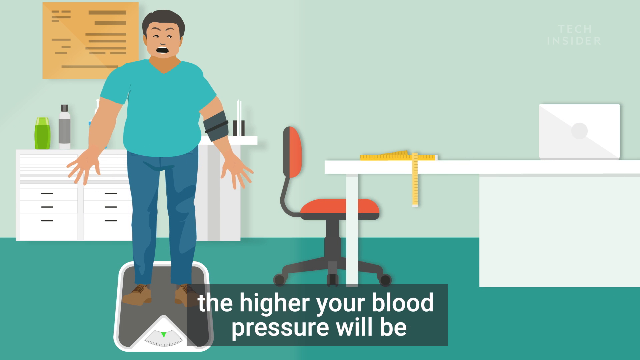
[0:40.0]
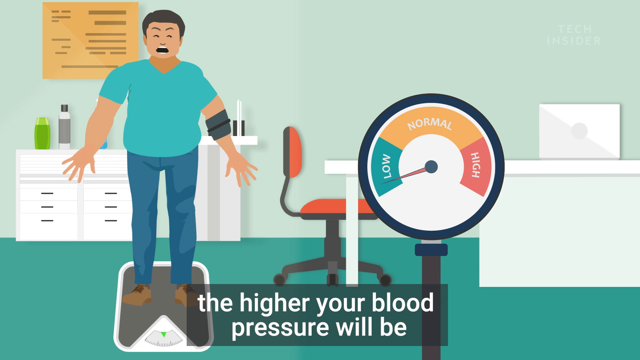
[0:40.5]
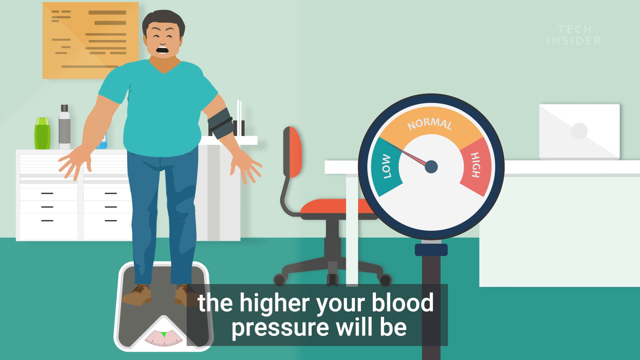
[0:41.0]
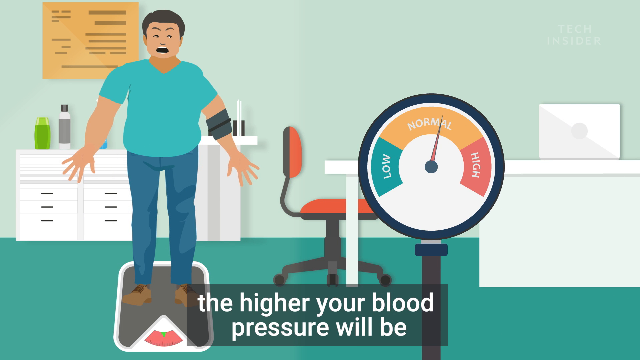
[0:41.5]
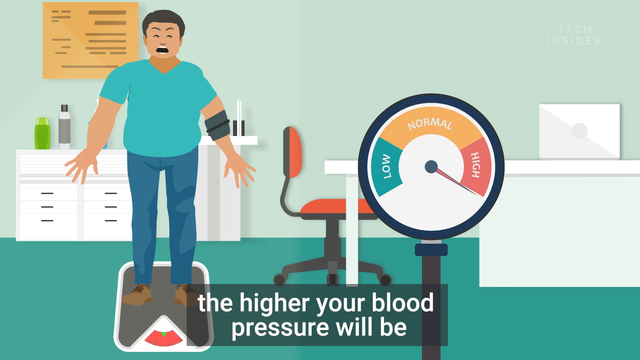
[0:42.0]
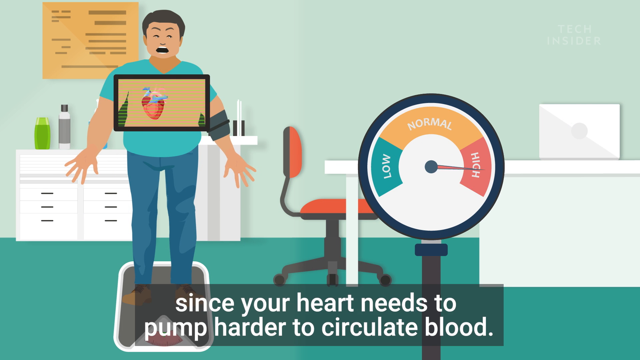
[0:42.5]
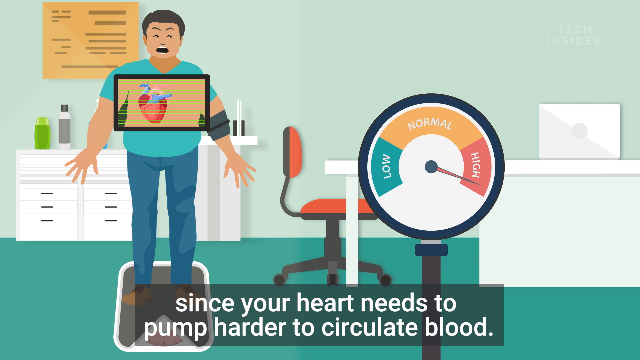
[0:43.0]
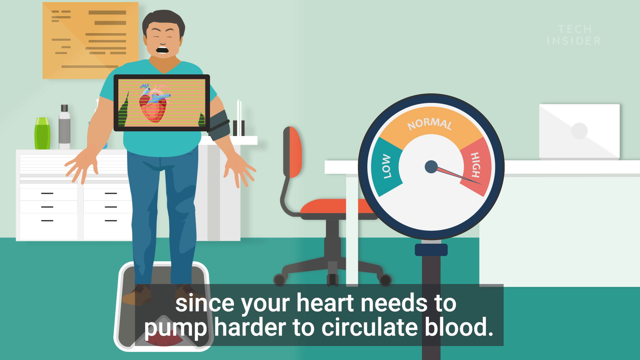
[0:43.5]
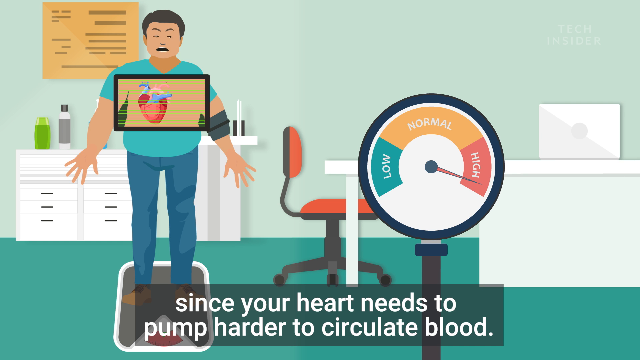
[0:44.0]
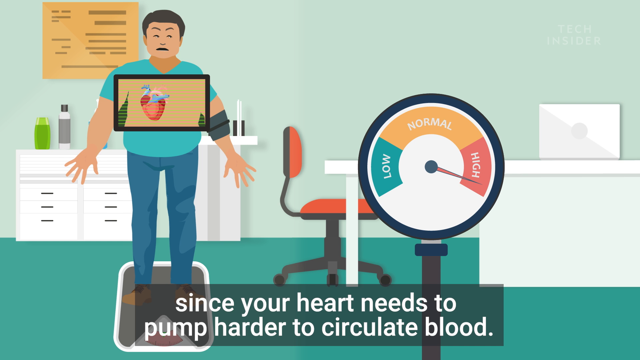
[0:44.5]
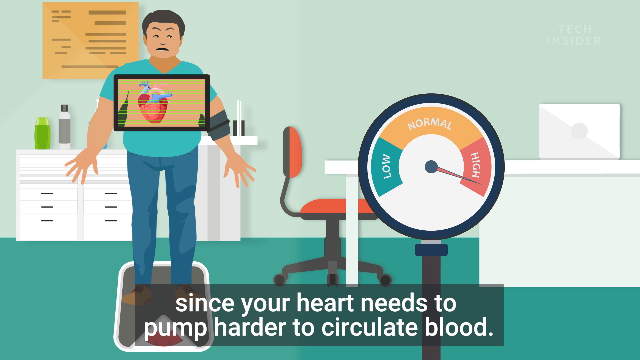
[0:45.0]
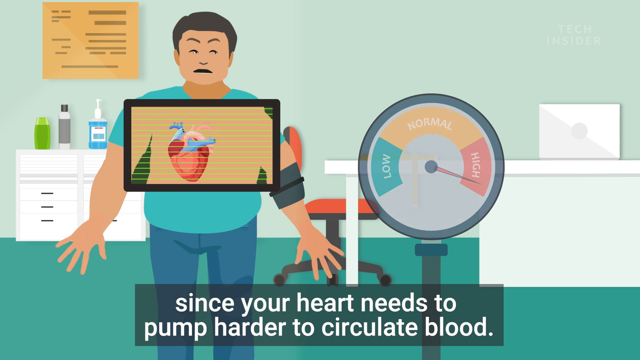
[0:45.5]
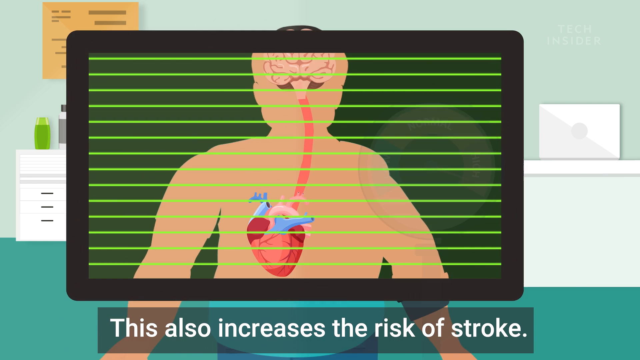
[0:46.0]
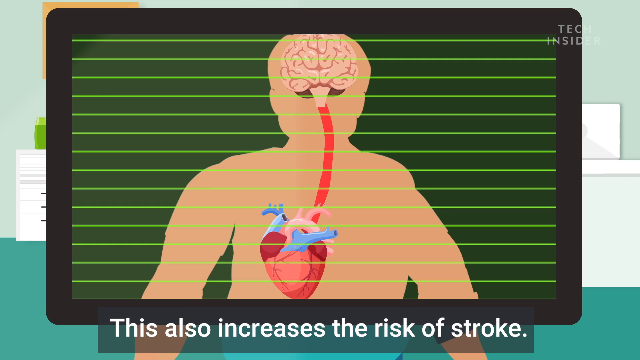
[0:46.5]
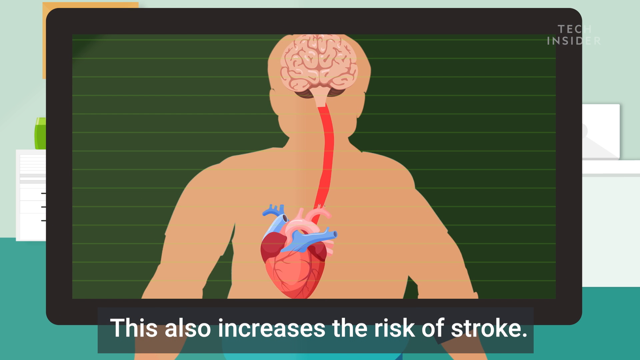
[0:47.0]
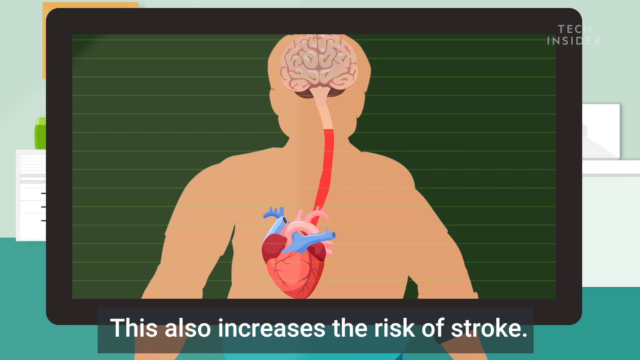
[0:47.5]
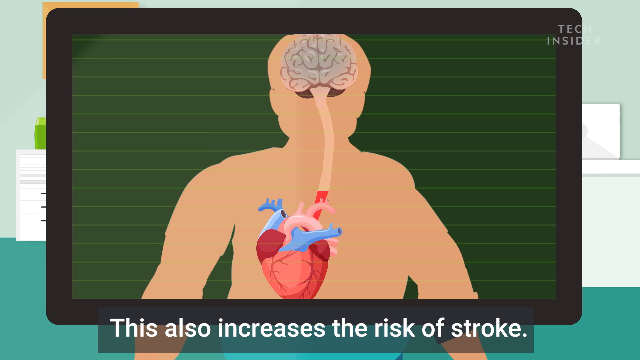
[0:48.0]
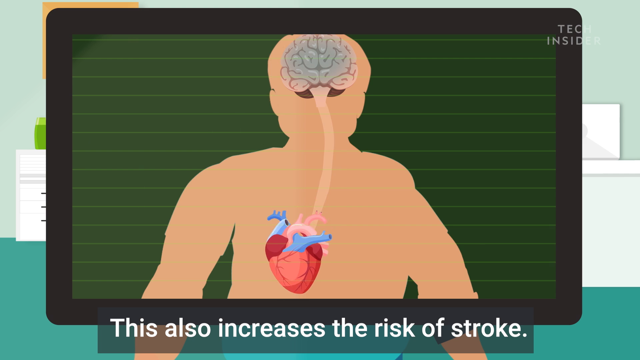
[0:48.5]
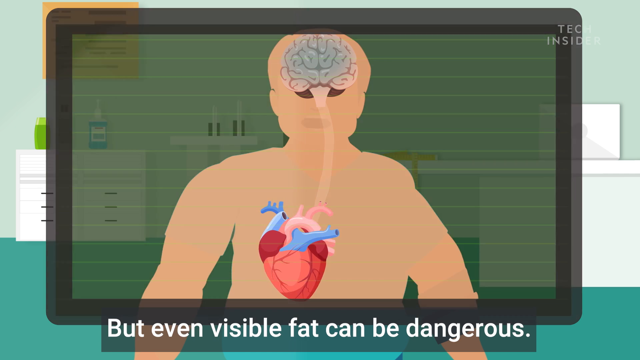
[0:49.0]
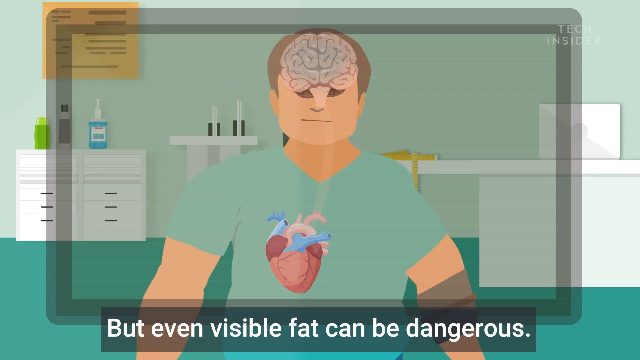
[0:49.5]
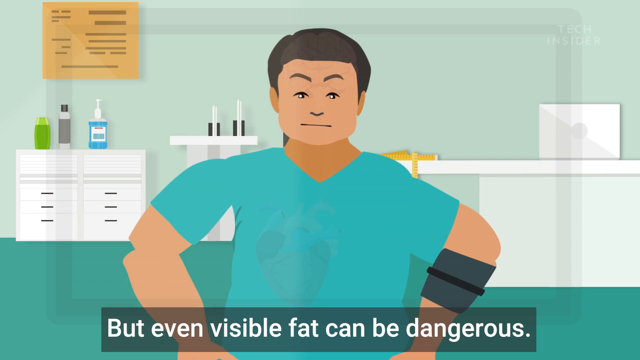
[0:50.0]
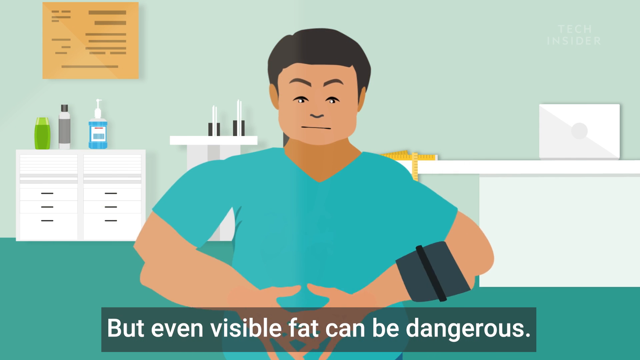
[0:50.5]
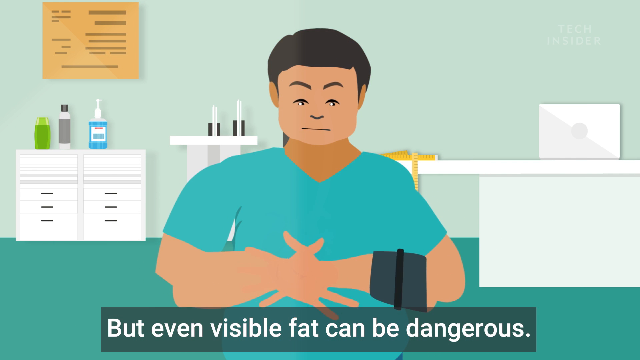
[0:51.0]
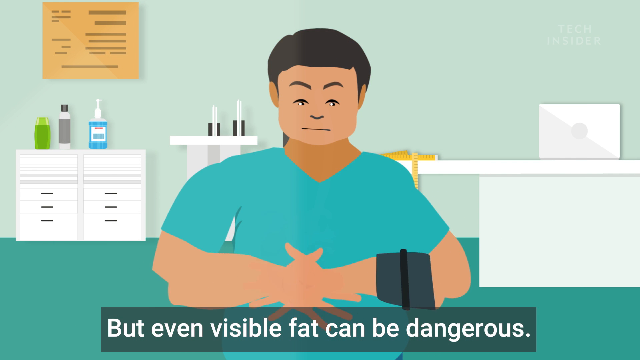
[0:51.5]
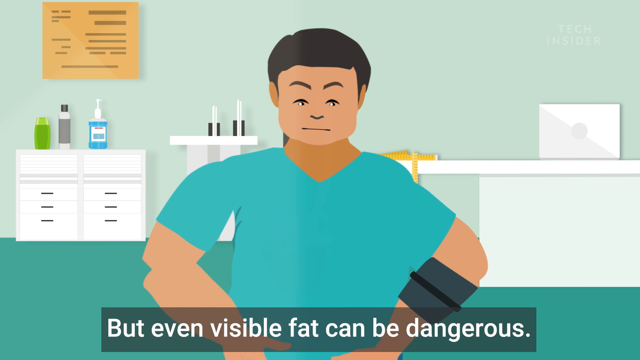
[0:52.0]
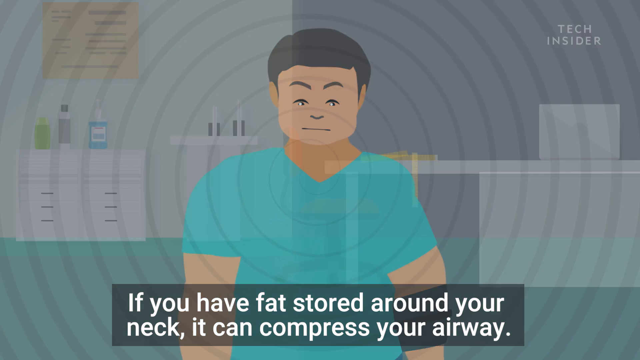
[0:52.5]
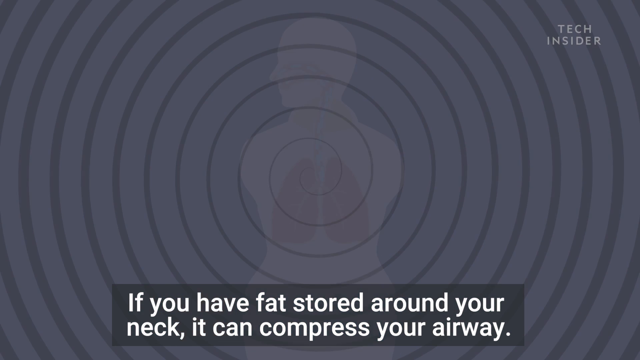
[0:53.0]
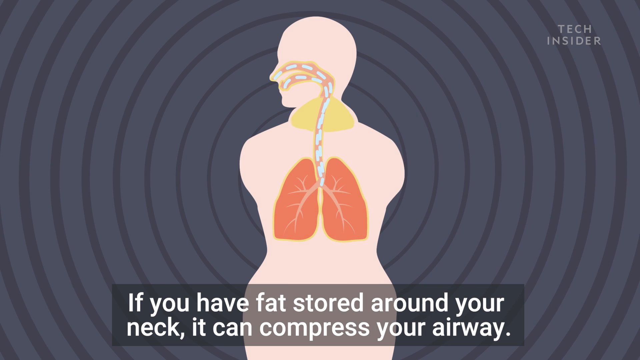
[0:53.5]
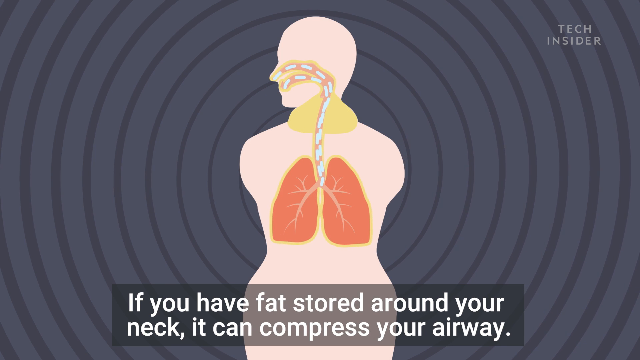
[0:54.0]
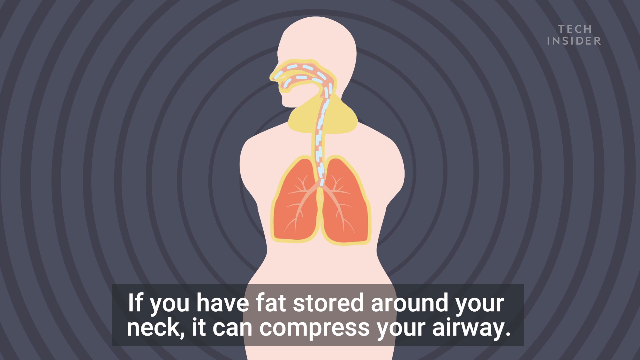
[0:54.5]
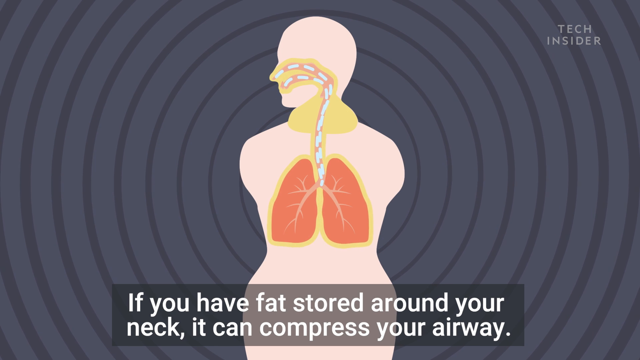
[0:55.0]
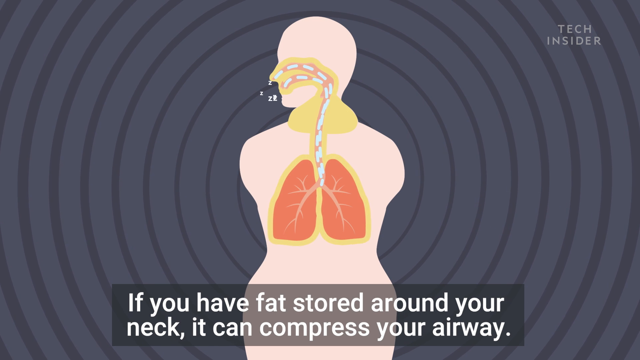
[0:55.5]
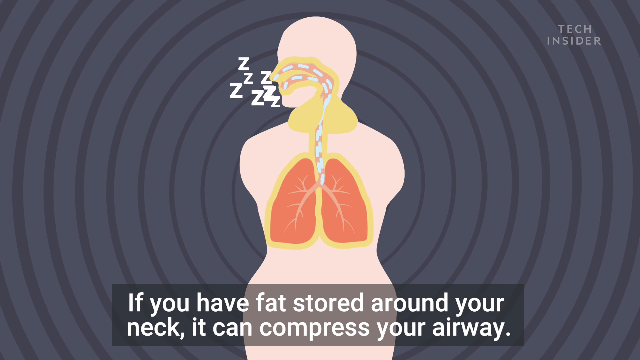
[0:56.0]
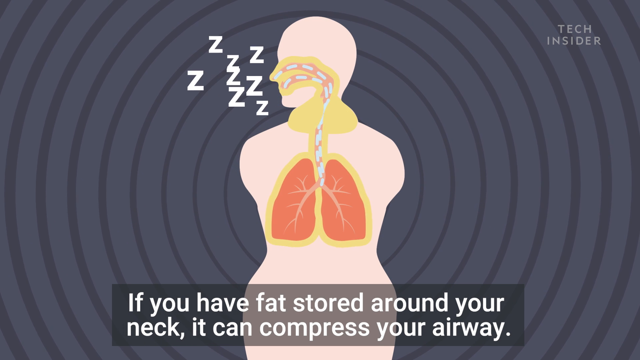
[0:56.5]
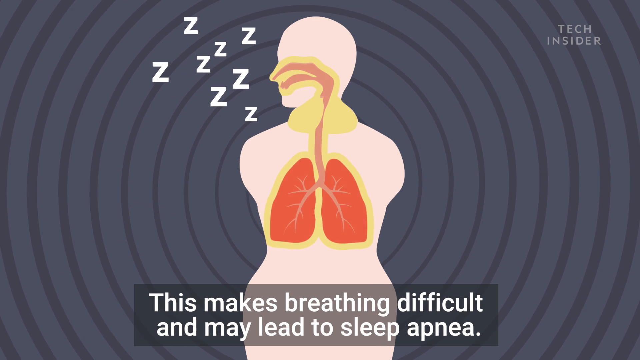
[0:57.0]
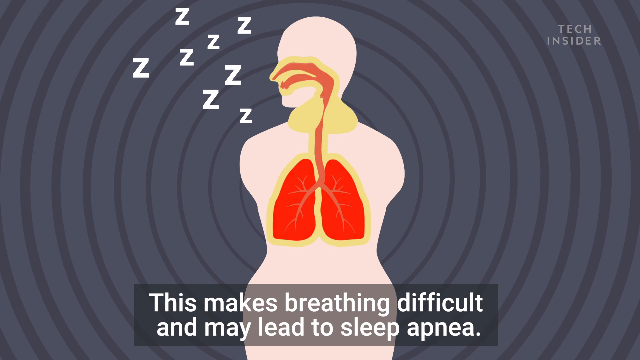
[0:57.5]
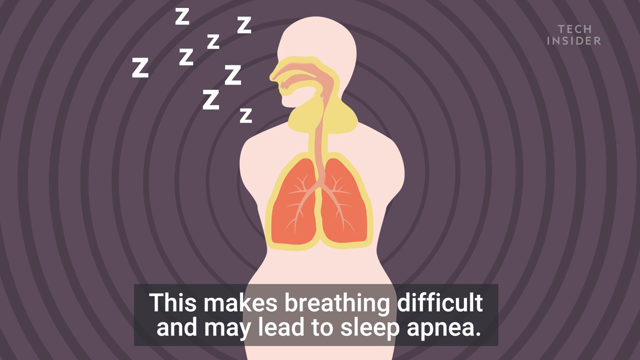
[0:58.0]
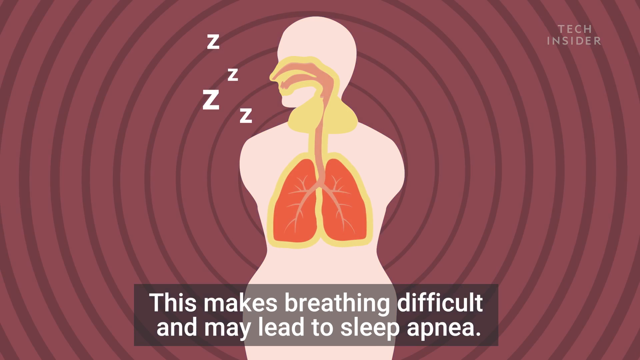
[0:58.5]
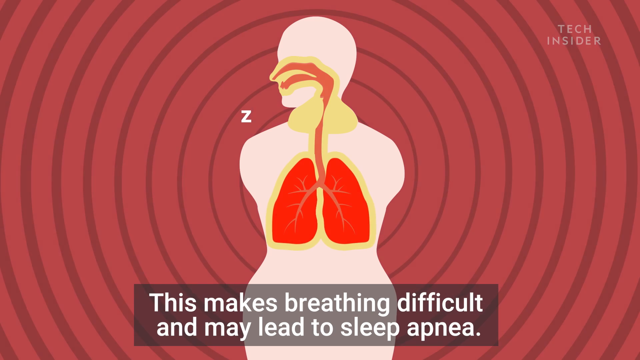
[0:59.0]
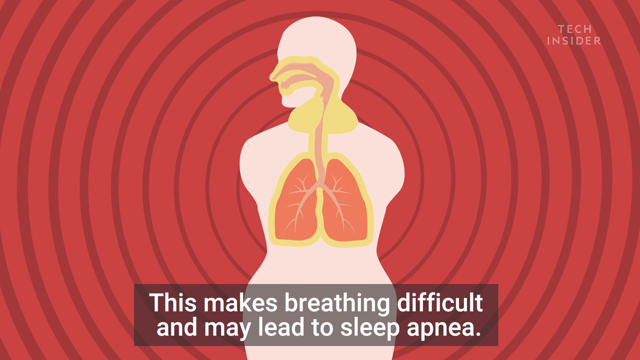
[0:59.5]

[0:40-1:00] The man stands on a weighing scale, apparently inside a doctor's office, with a blood pressure cuff on his left arm, and the text underneath reads "the higher your blood pressure will be." A picture of a sphygmomanometer appears, and its dial moves from low to normal to high. The man's face appears stressed as the text reads "since your heart needs to pump harder to circulate blood." A black rectangle on the man's chest seems to give an x-ray view of the heart, which is pumping. The view zooms in to the man's chest, showing the x-ray of his heart with a tube connecting it to the brain, and the text reads "this also increases the risk of stroke." The man is then shown with the text "but even visible fat can be dangerous"; he crosses his hands in front of his chest, and the text reads "if you have fat stored around your neck, it can compress your airway." The next screen shows the lungs with two tubes leading from the nose down the trachea to the lungs, and a yellow lump around the neck area. A representation of what is presumably air moves from the nose to the lungs, and letter Z's seem to come out of the person's nose or mouth, as if he is sleeping. The text reads "this makes breathing difficult and may lead to sleep apnea," with red circles in the background.